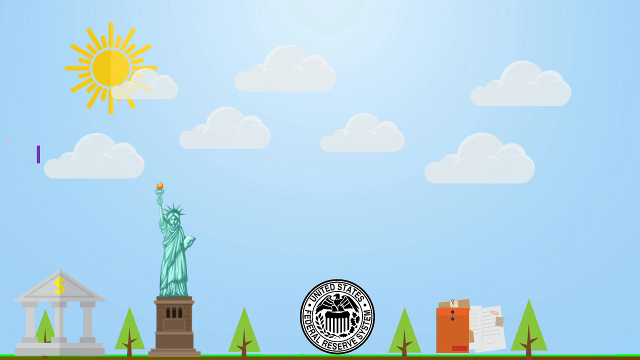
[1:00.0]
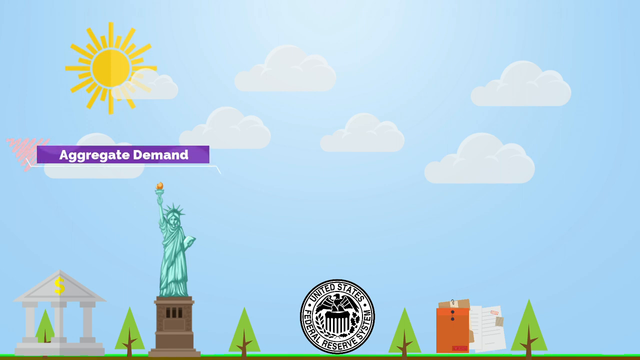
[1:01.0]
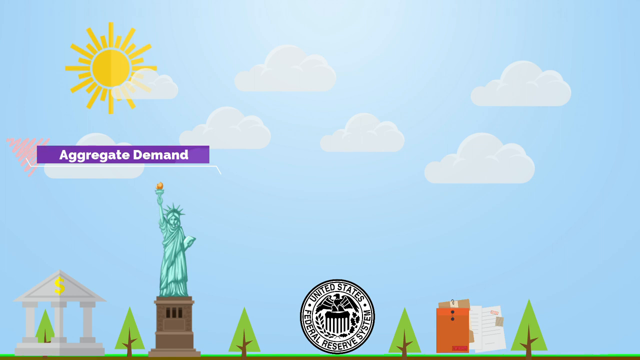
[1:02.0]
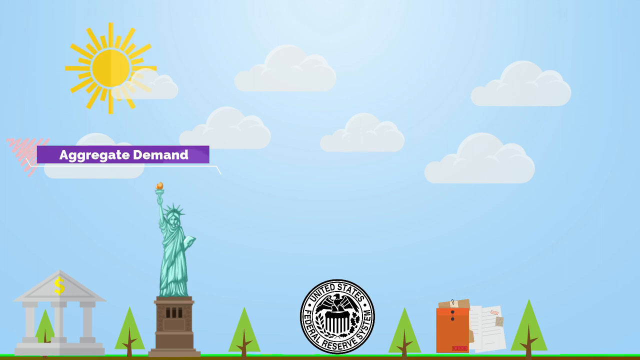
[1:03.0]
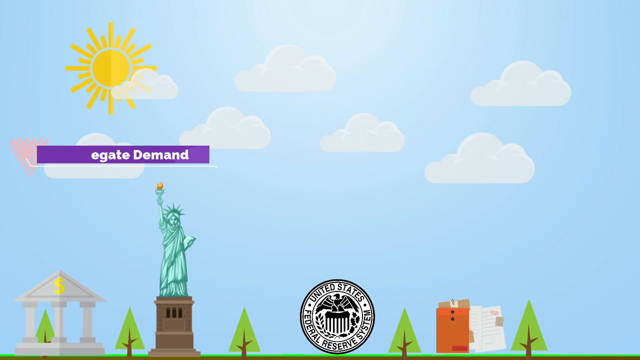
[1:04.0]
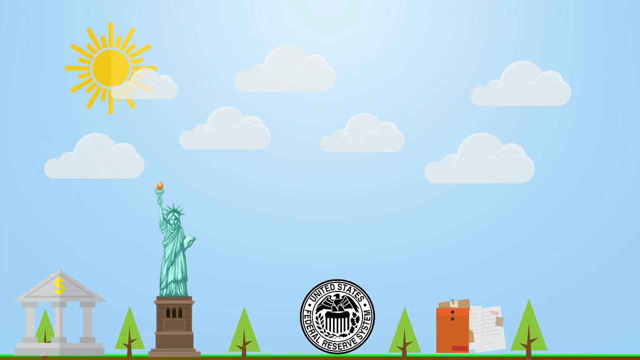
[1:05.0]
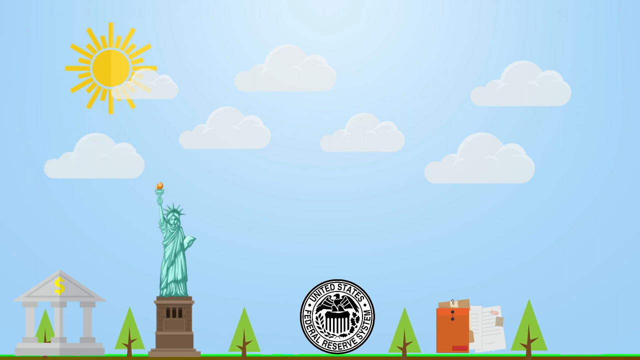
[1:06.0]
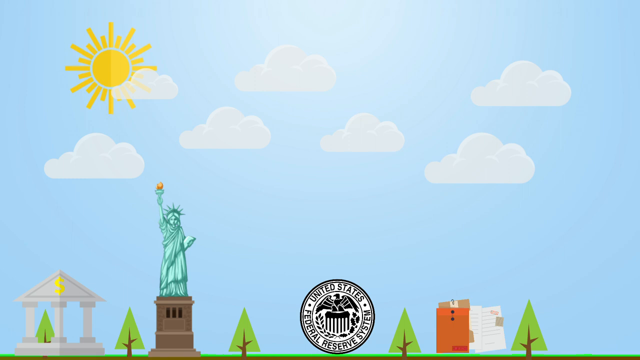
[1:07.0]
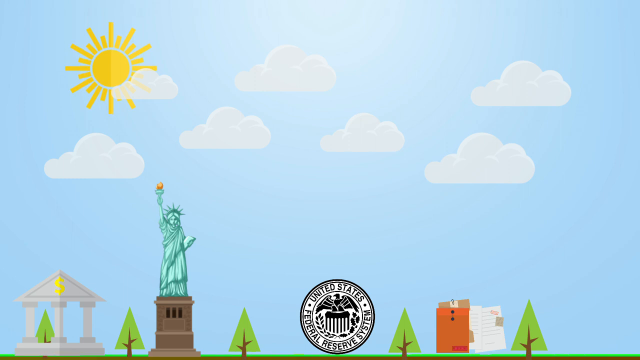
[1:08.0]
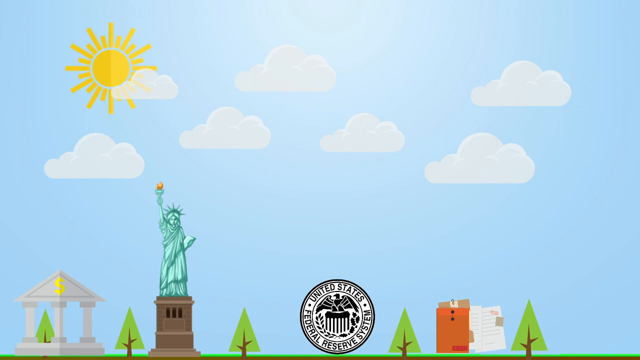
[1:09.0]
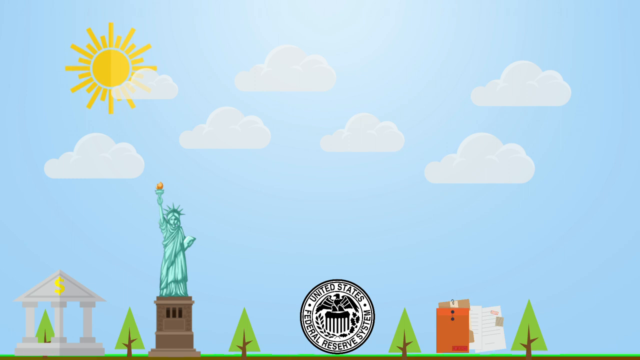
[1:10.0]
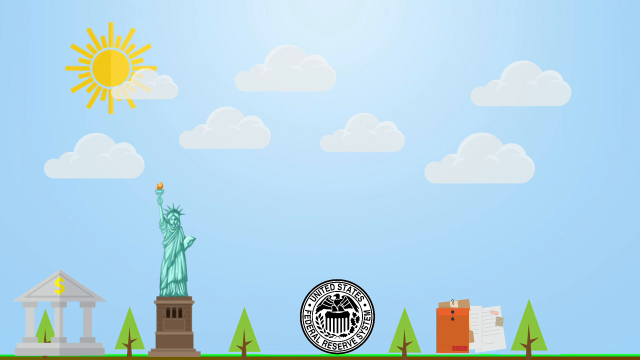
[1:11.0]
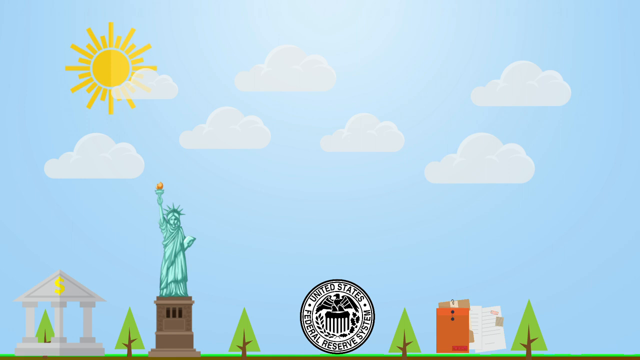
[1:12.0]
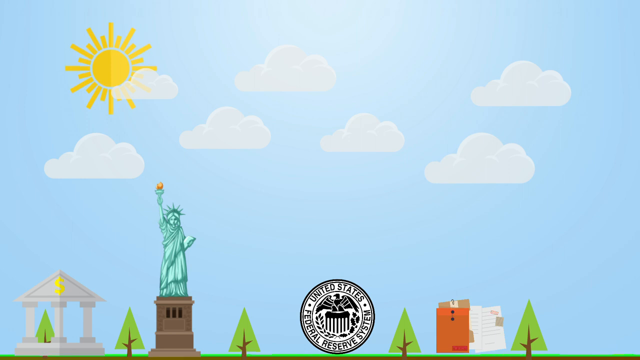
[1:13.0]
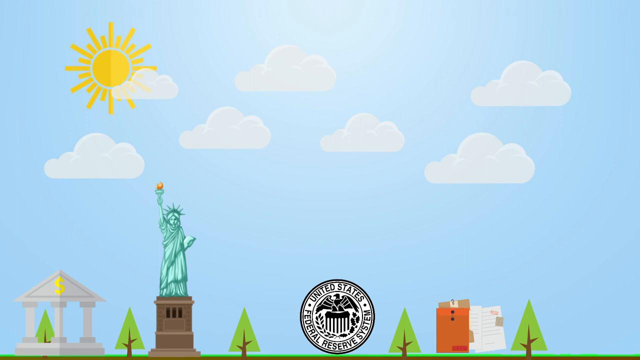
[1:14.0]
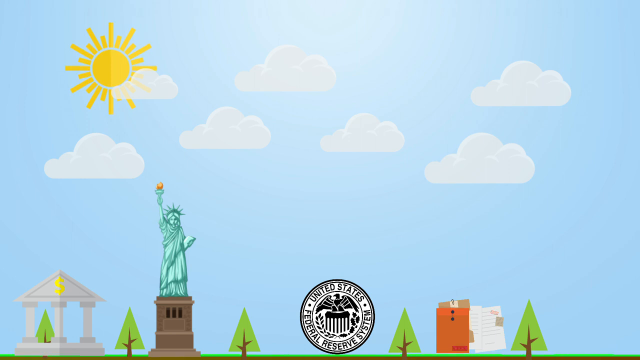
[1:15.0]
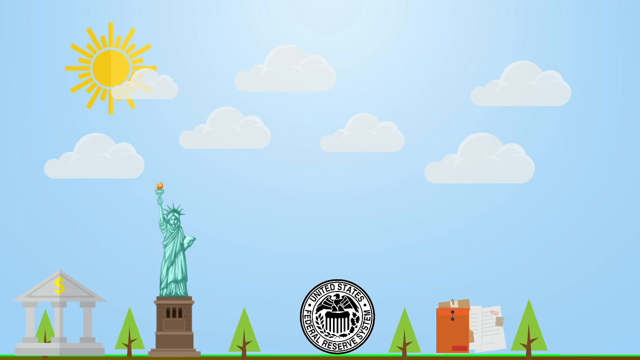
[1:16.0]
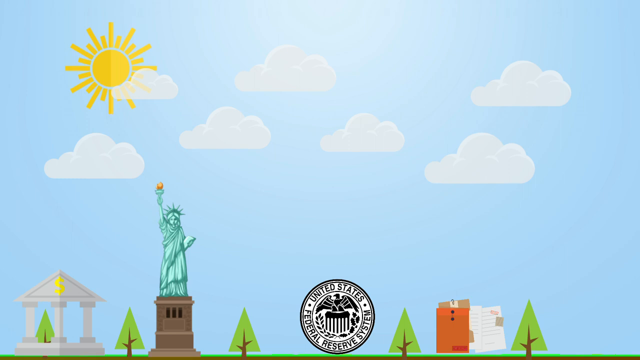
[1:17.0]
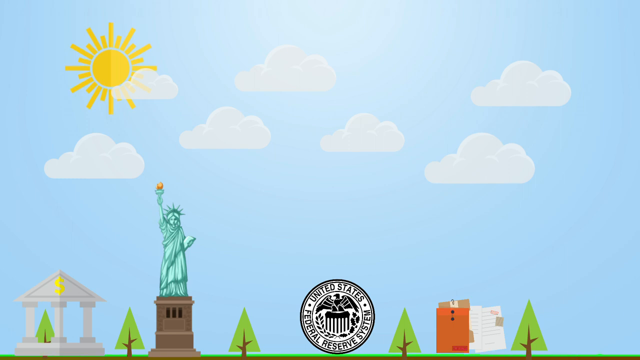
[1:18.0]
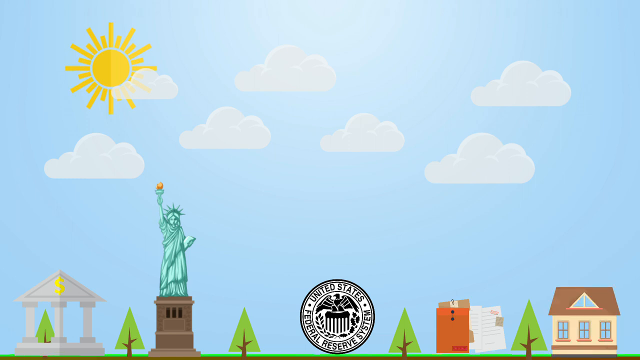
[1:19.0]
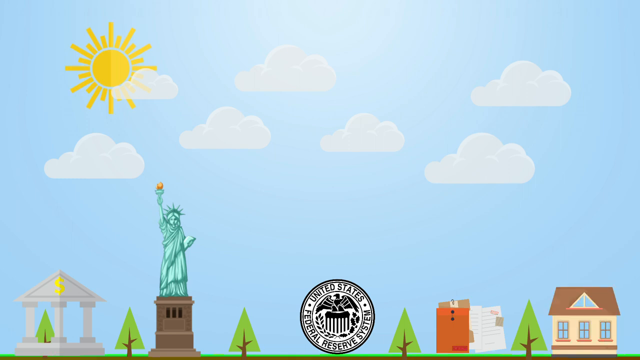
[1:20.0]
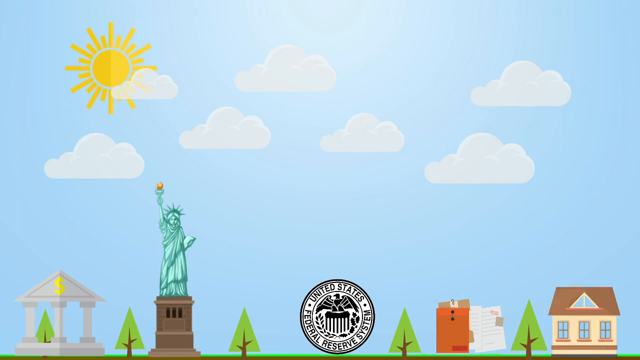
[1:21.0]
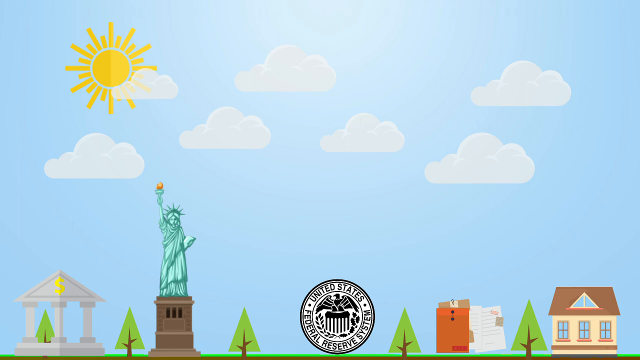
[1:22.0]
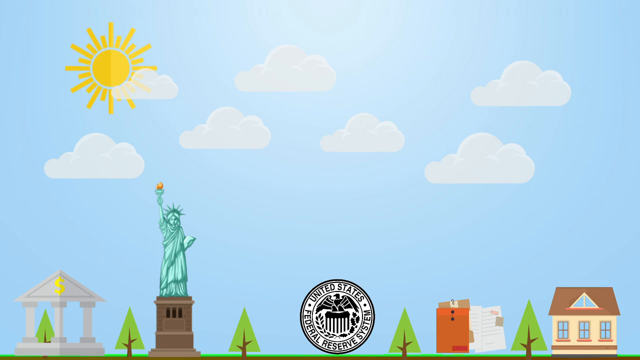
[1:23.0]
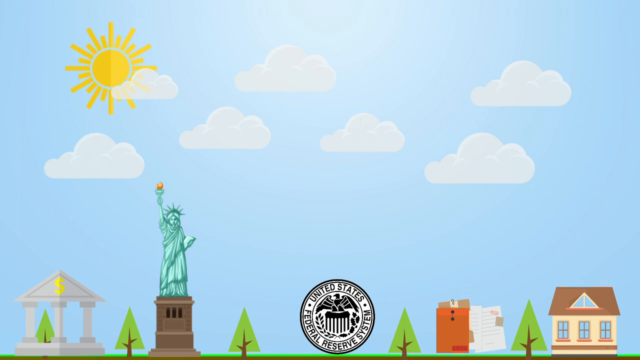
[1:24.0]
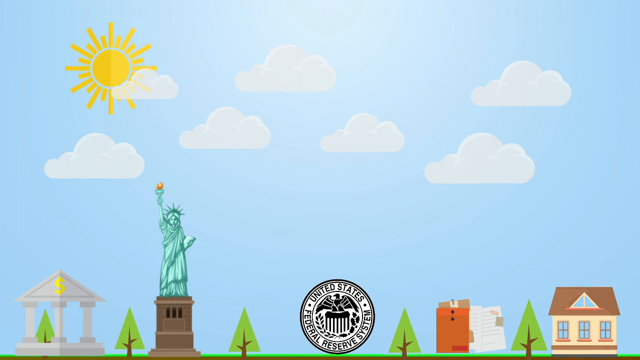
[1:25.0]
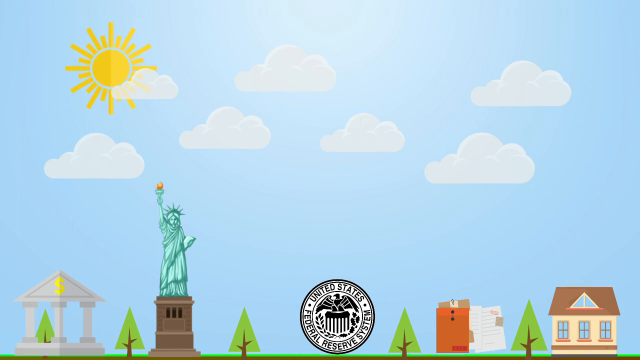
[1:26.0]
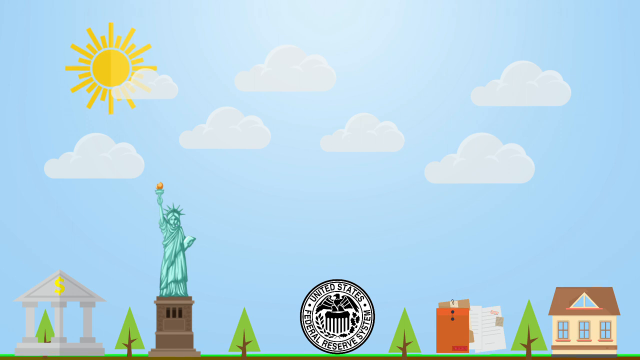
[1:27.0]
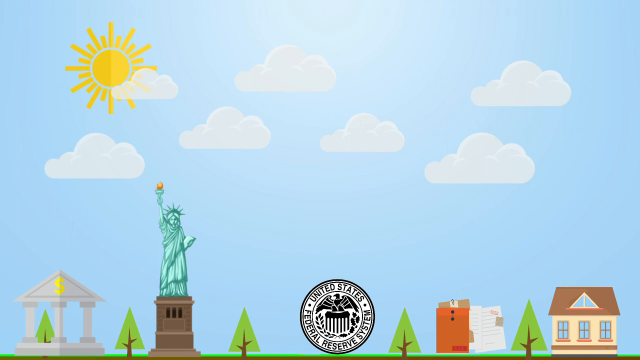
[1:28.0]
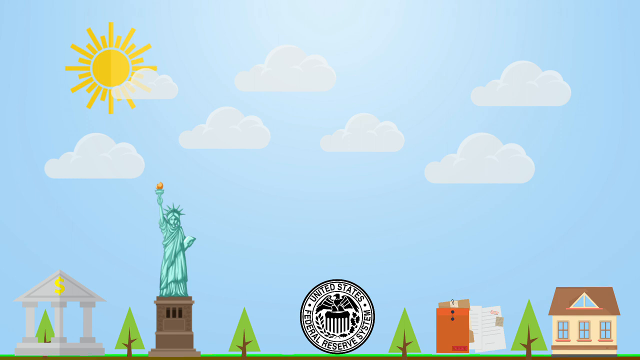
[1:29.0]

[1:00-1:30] The light blue sky has a sun and clouds at the topmost section of the video. The left side of the sun is dark gold and the right side is light gold. Seven fairly white clouds are moving from left to right and right to left. A banner flashes with the words "aggregate demand" in white font on a purple background. At the bottom of the screen is a building with a yellow dollar sign on its roof. Next to it is the Statue of Liberty with one hand stretched out holding a torch. The statue wears a crown and is green, as is the torch handle, while the flame is a mix of red and yellow. The statue also holds a book while standing on dark brown mounts. Next to the statue is a circular emblem that says "United States Federal Reserve System", with an eagle inside the circle, in a mixture of white and navy. Next to the emblem is a dossier that is orange with a touch of dark brown, with papers next to it. Alongside the dossier is a building with a brown roof. Placed side by side with these images are five pine-looking trees, green with brown branches.